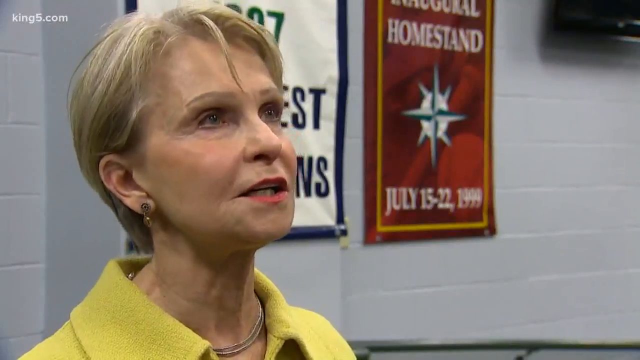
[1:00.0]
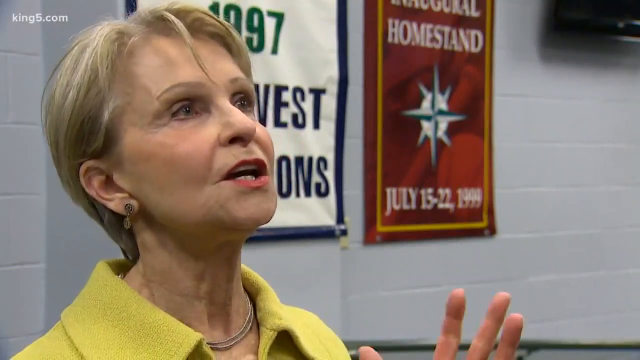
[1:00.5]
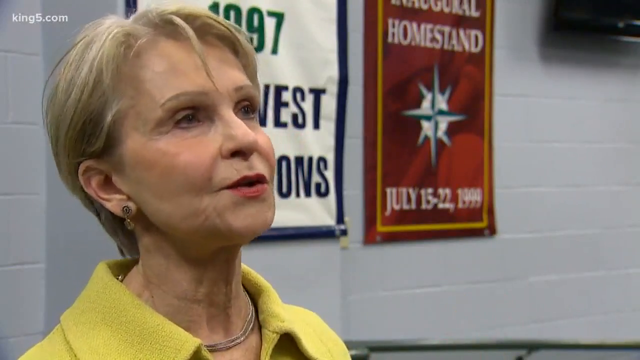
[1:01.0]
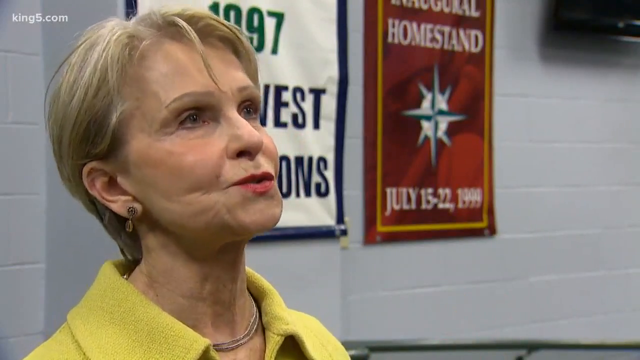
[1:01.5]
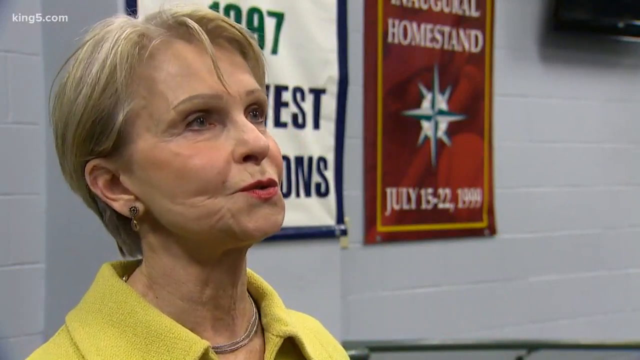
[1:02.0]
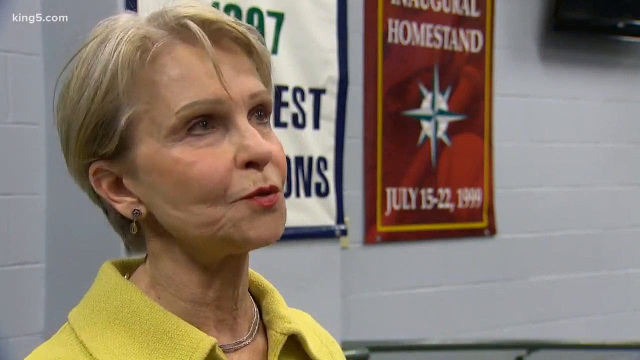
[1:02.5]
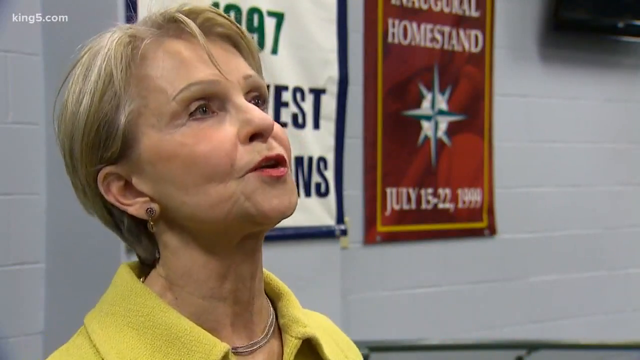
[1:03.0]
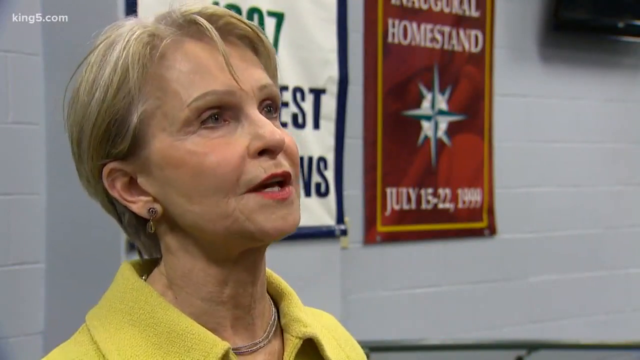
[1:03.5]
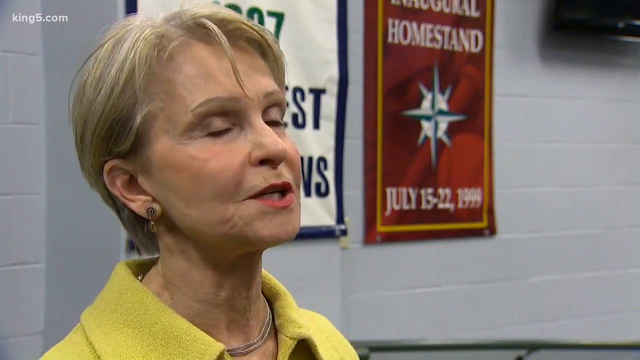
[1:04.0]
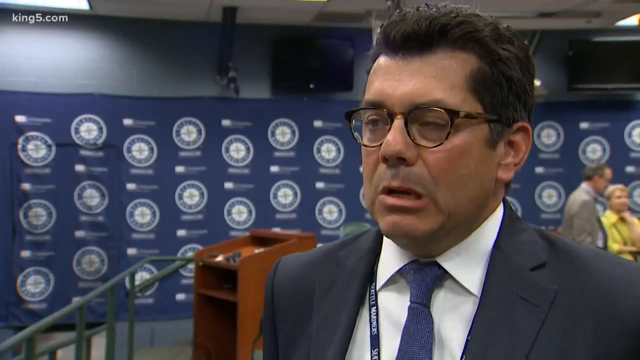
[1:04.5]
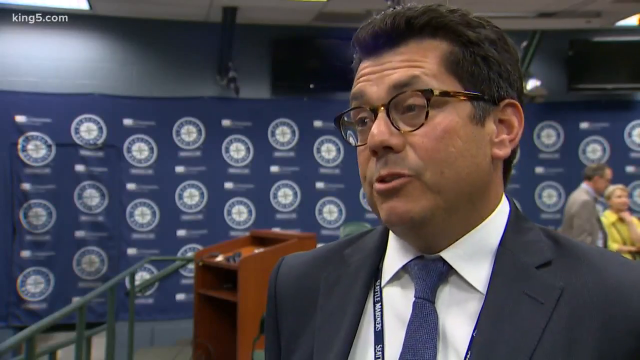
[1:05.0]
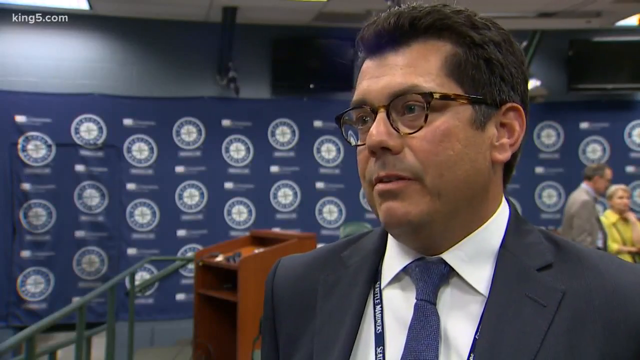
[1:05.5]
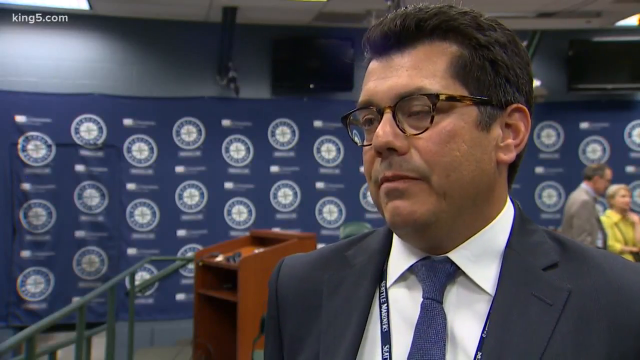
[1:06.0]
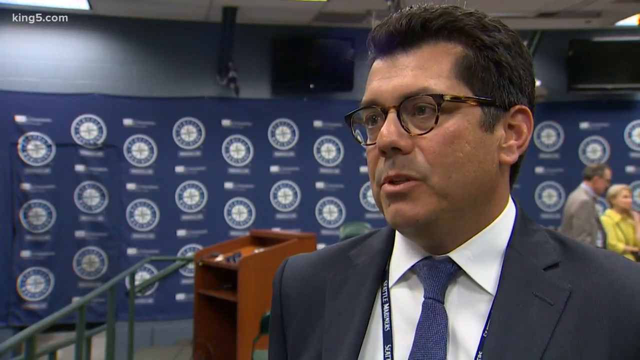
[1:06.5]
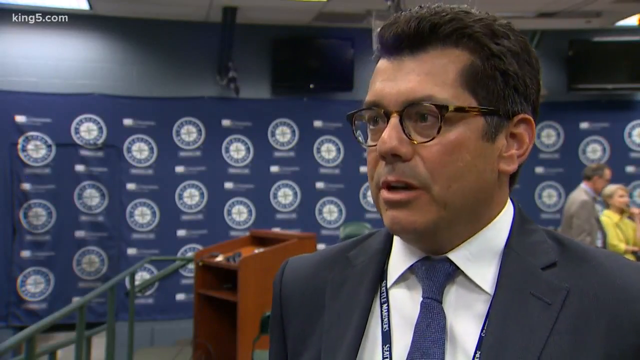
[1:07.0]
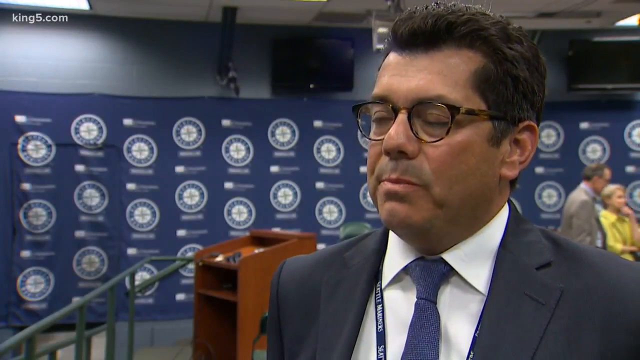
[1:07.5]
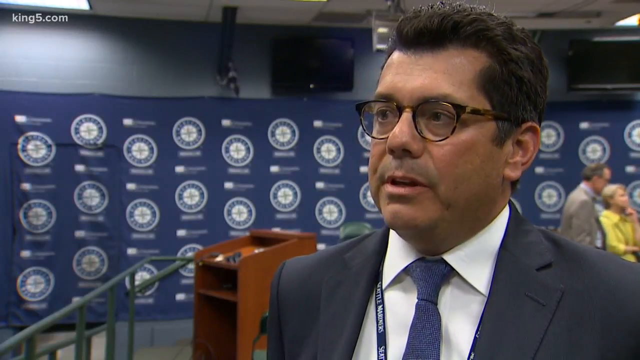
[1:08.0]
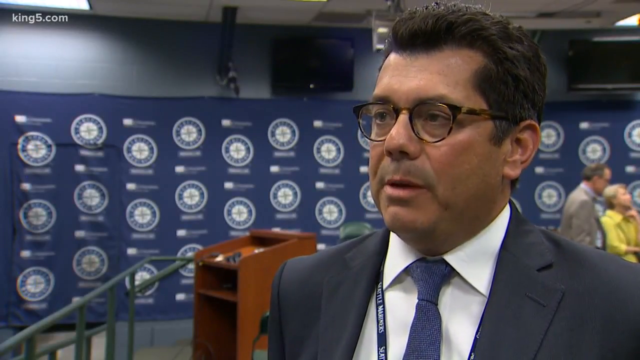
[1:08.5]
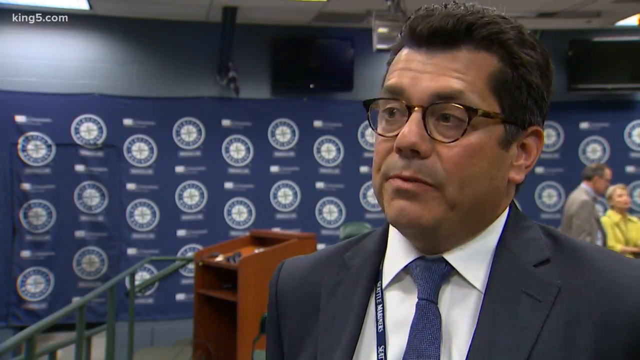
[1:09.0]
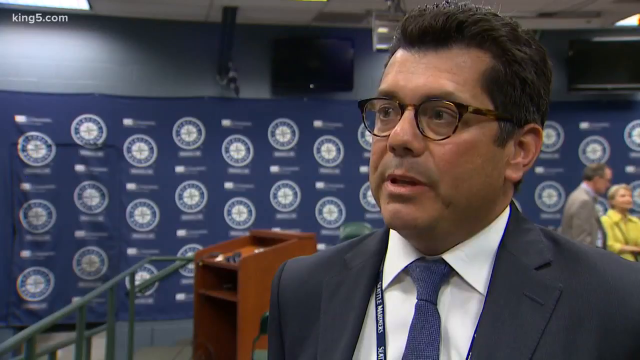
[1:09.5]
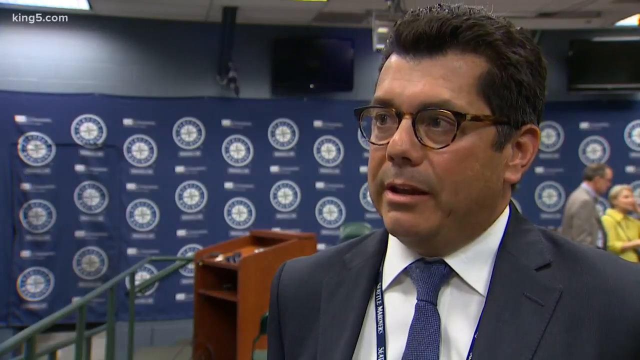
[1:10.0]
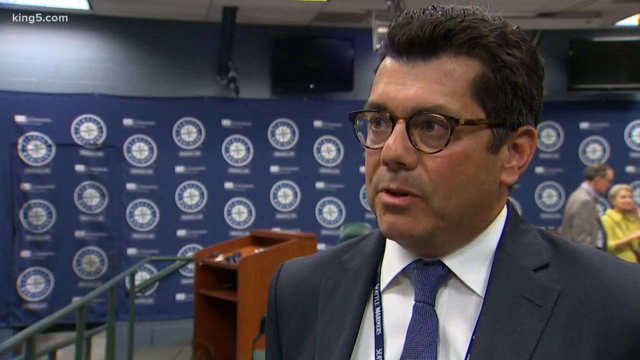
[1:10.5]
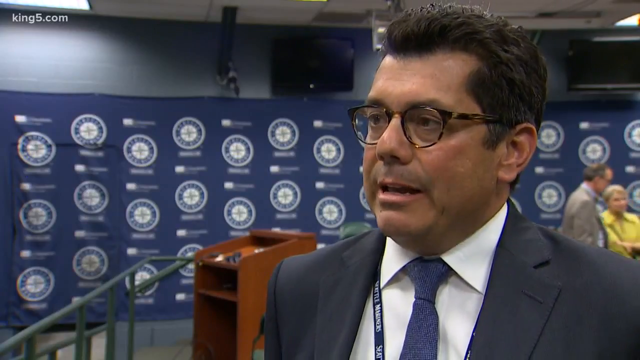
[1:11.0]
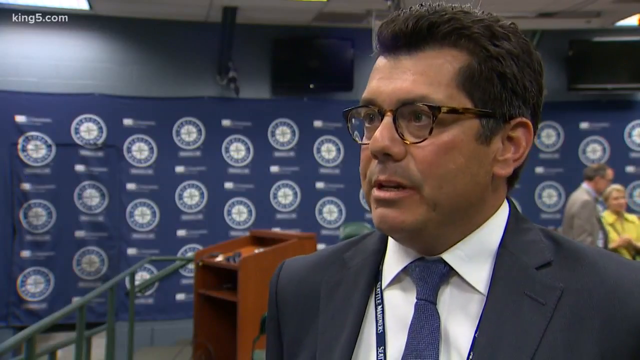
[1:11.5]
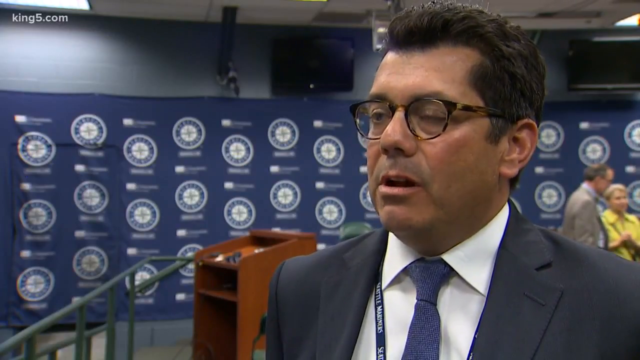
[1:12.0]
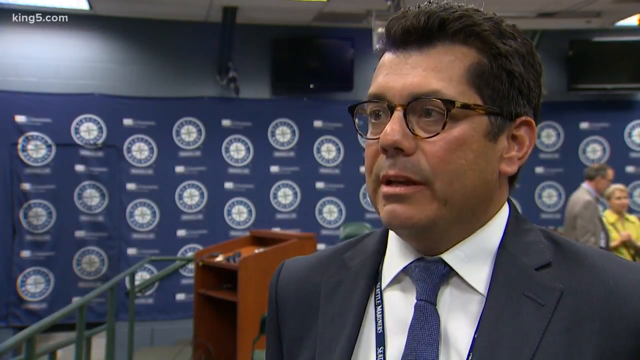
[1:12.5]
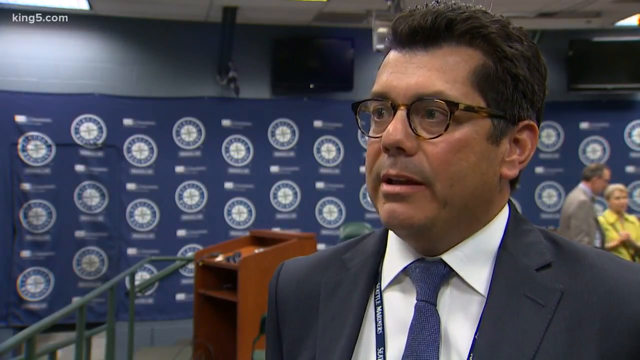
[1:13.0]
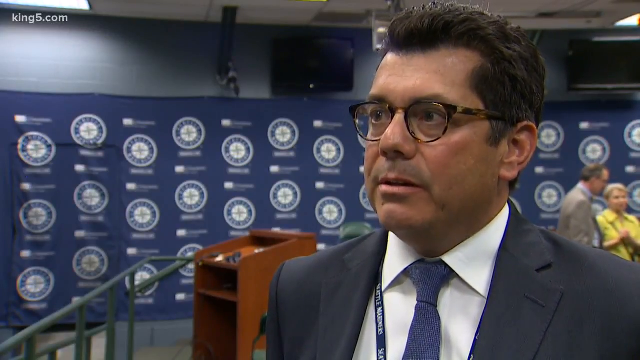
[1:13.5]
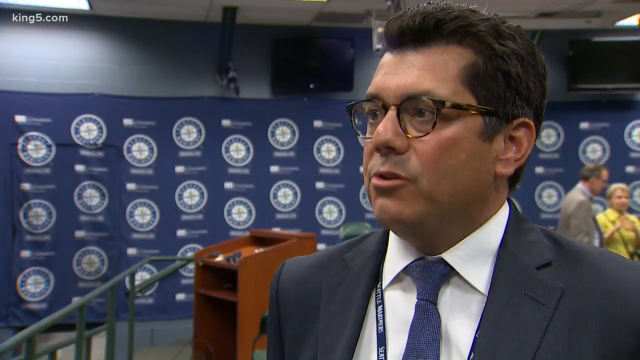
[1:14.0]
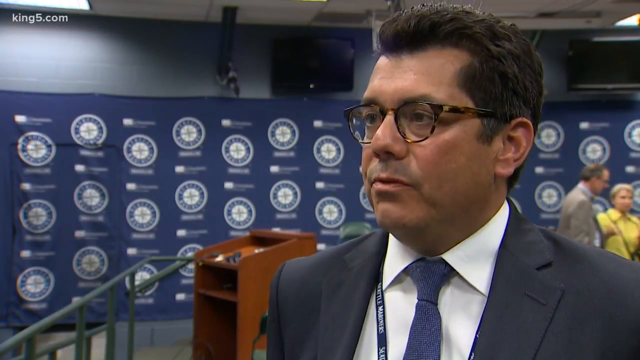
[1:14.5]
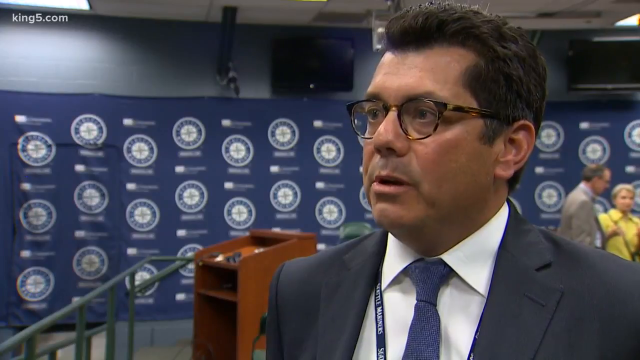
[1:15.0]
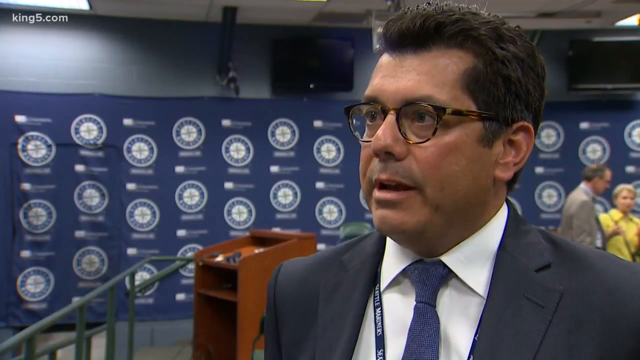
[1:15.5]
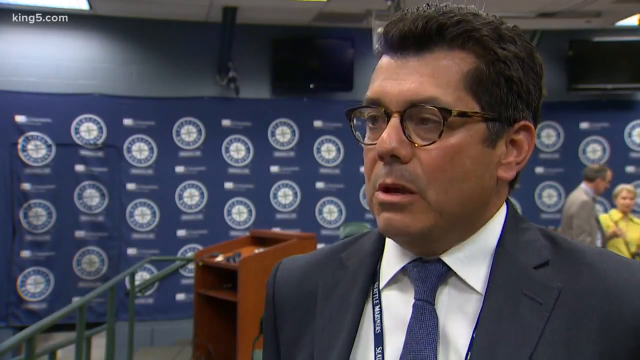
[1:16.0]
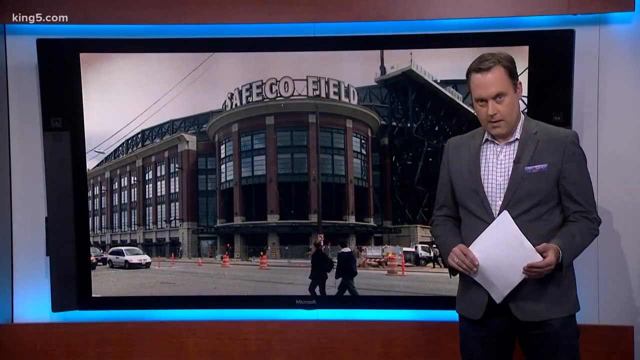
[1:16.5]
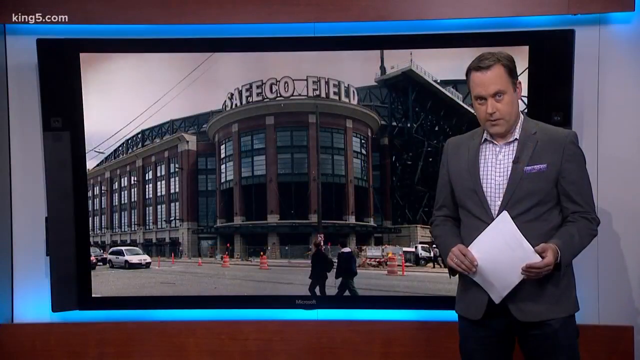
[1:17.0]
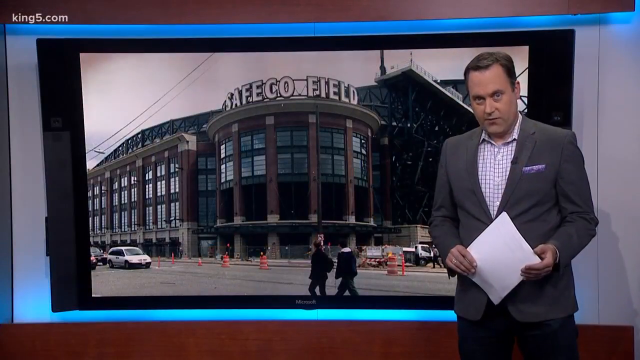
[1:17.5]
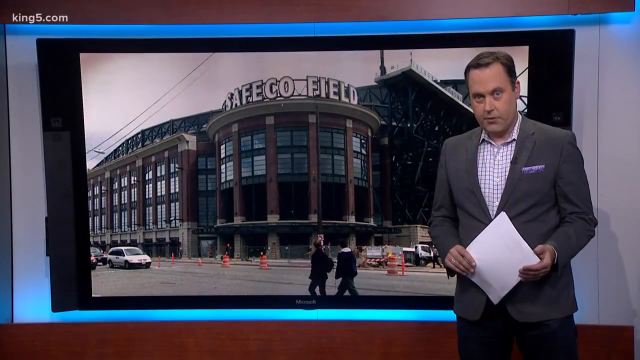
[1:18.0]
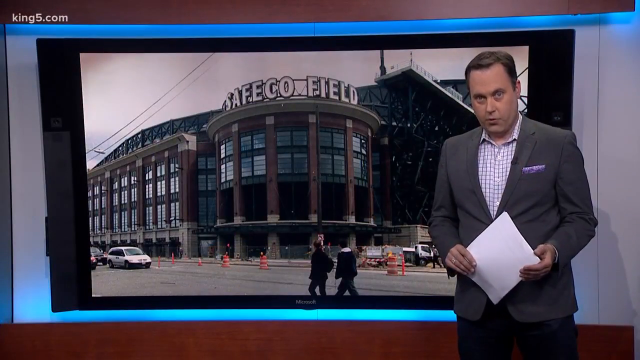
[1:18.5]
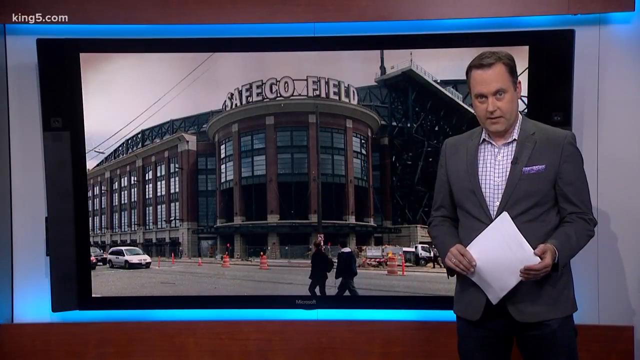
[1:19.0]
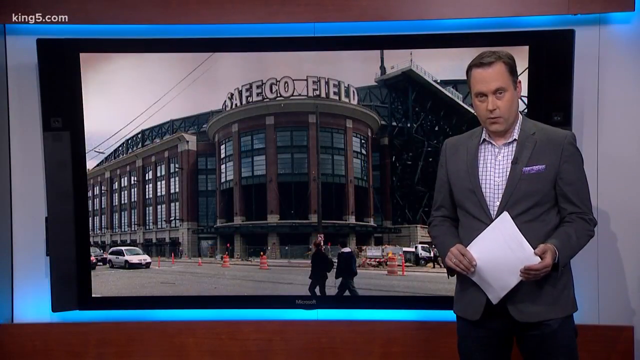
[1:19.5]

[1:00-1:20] Virginia is talking with a white wall behind her and two flags hanging off it. She is seen from the side and is not looking at the camera. The shot switches to the blue banner background and the single podium by the folding chairs, where a man in his 50s appears to be speaking; he is not looking at the camera but off beside it, as if someone is next to it. Some of the people who were sitting at the long desk earlier are visible in the background. The video then returns to the newscaster in front of the Safeco building, still standing off to the right-hand side with the screen, and two blue lines are at the bottom of and below the screen.